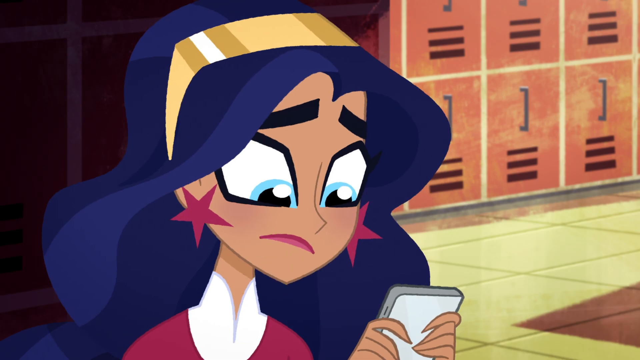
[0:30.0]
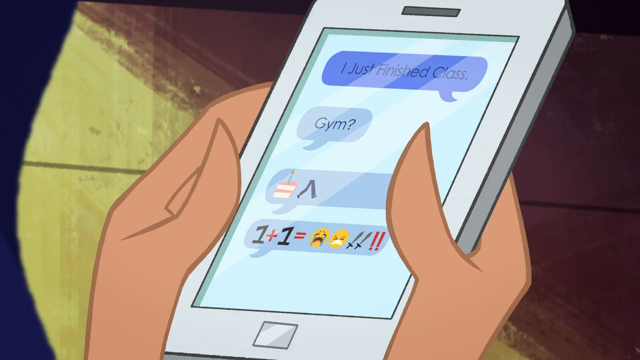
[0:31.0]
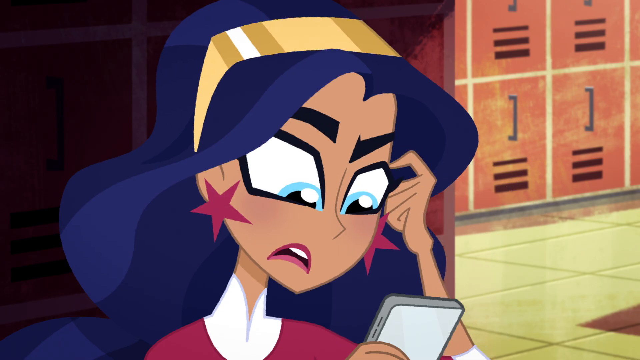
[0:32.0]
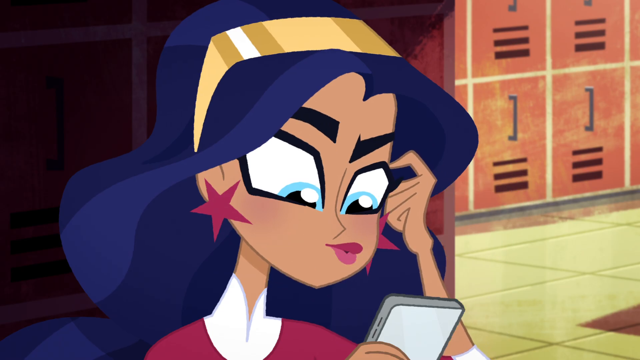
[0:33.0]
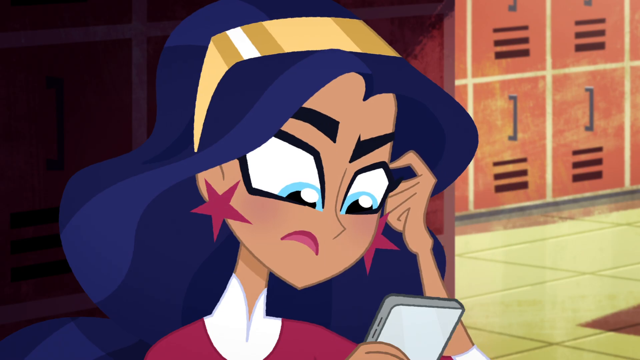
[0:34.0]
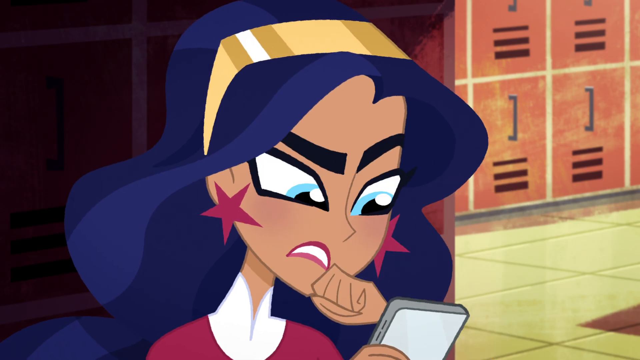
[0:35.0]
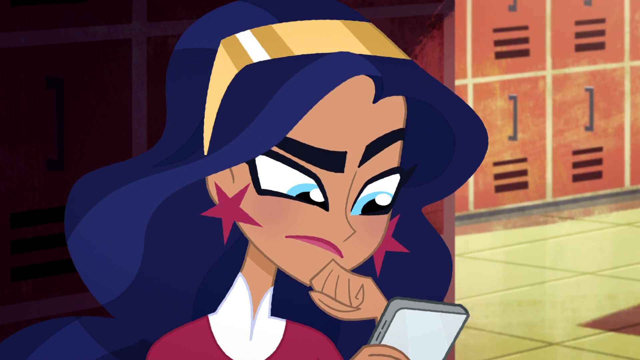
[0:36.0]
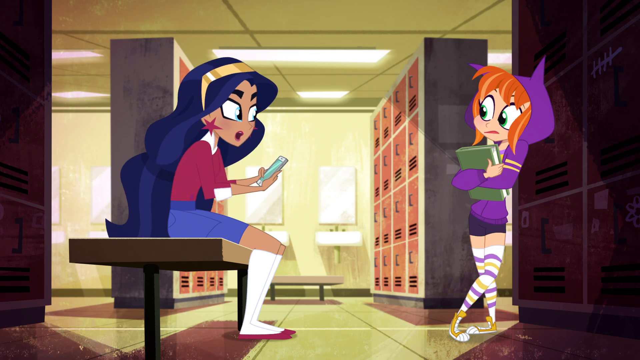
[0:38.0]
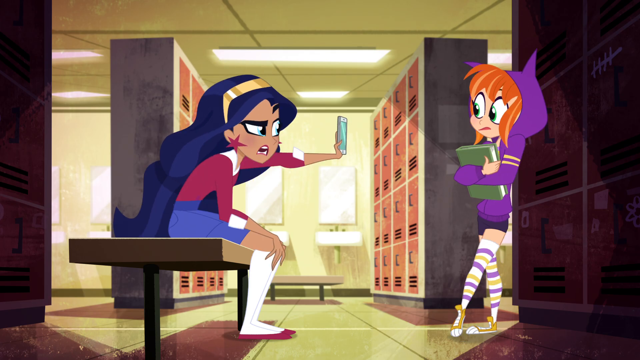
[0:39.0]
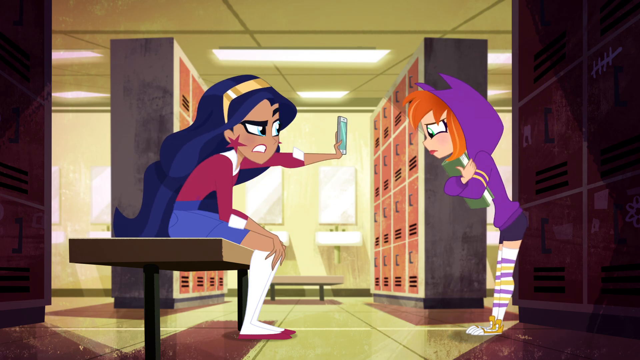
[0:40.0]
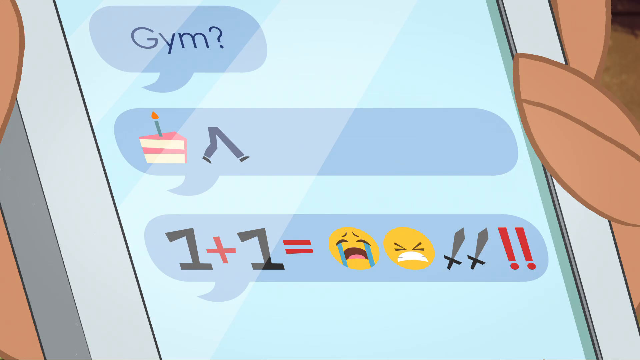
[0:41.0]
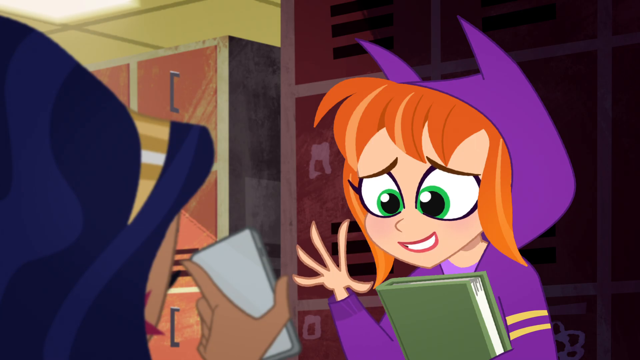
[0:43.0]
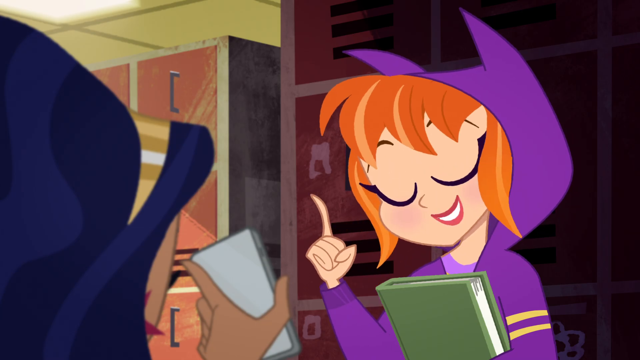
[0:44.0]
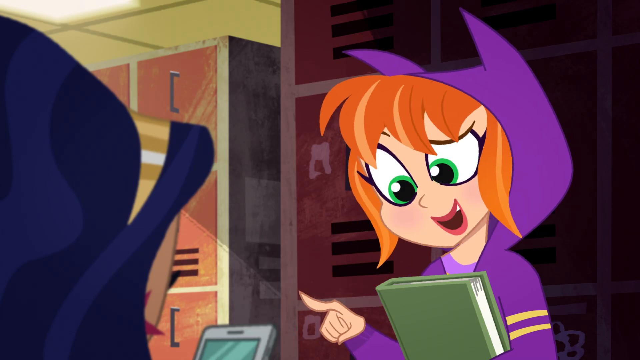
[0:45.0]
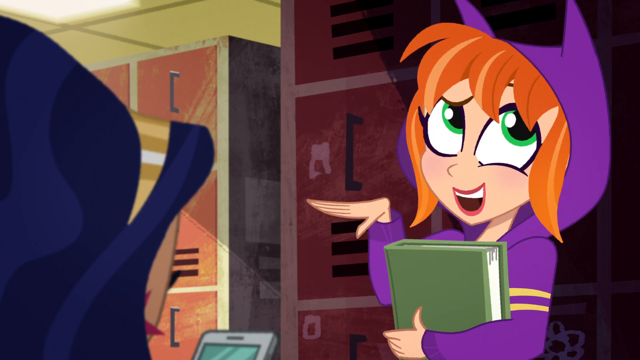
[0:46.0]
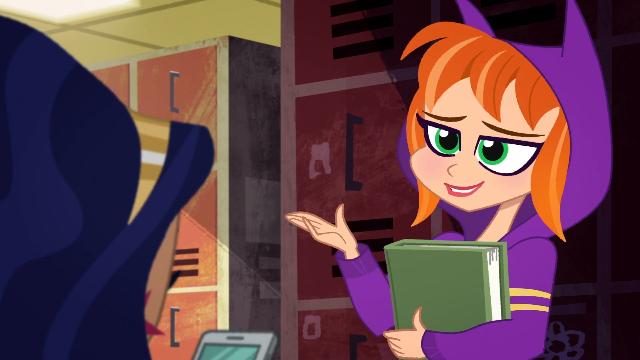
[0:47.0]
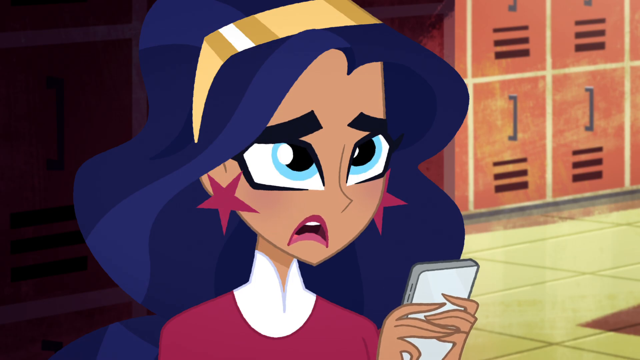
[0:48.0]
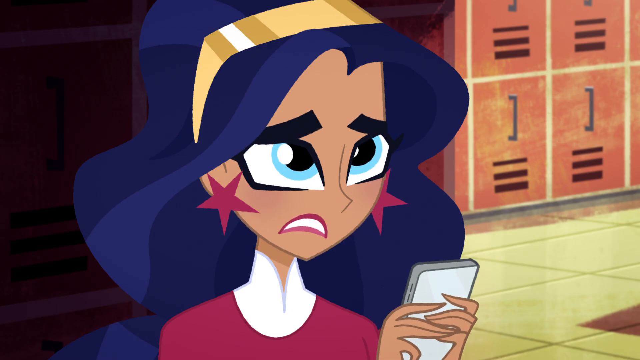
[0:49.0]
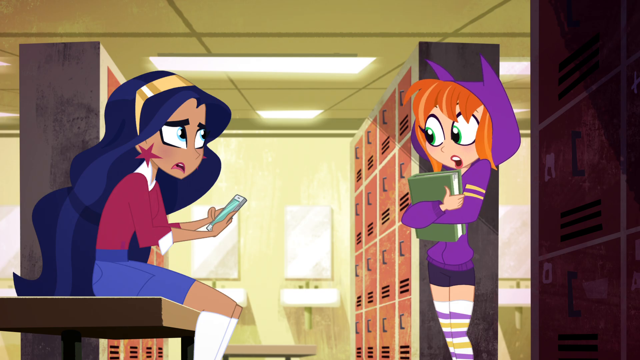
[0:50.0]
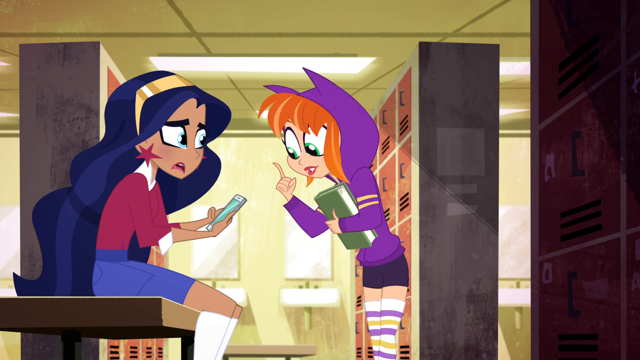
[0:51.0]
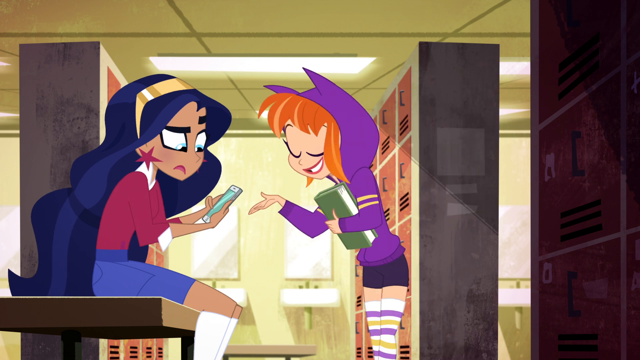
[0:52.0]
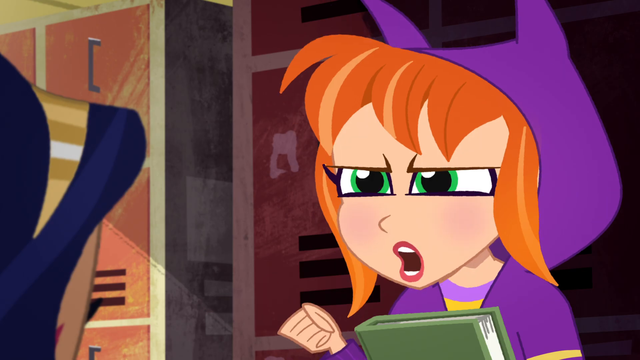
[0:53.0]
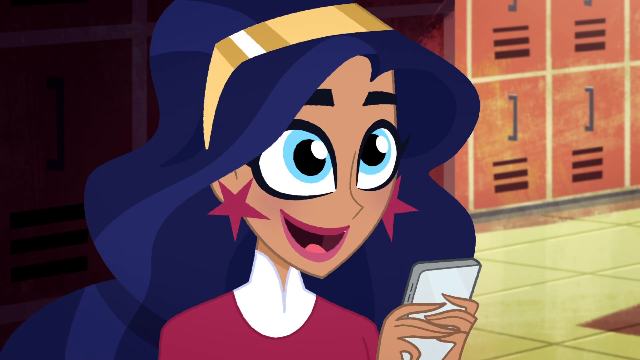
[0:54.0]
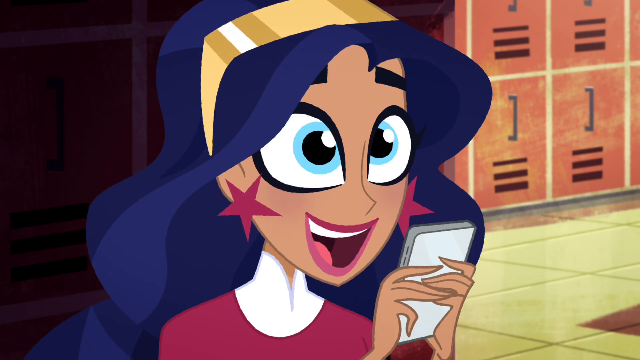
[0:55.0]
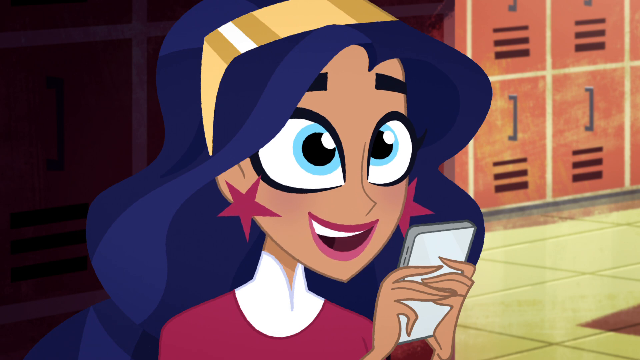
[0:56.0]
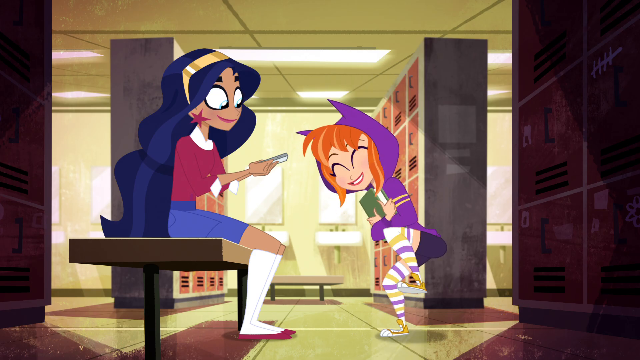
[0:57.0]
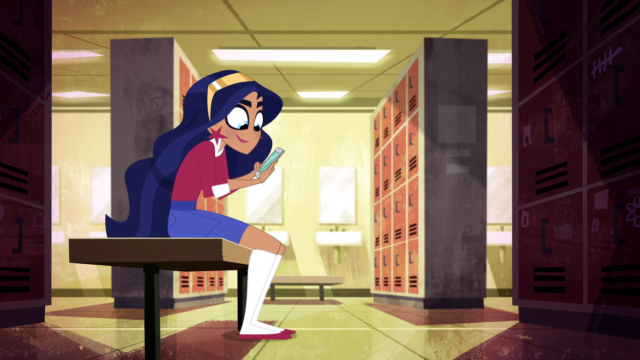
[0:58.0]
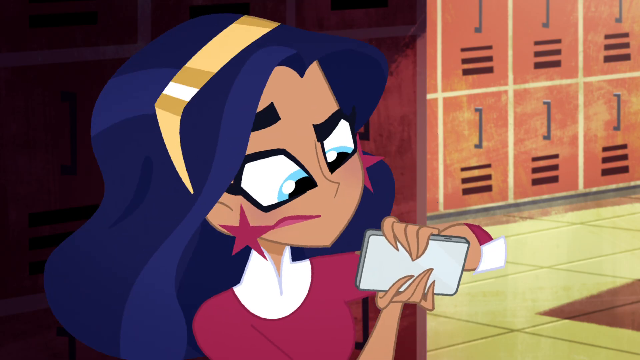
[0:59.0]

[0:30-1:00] In the illustrated, cartoon- or anime-like video, messages appear on a cell phone. The first reads "I just finished class," the next reads "Jim," then comes a cake with legs that walk, and the last is one plus one equals a crying face emoji, an angry emoji, two sword emojis, and two red exclamation point emojis. The girl seems upset by the message, scratching the side of her head as she looks at the phone. Eventually she puts her fist up to the front of her face, and another character wearing a blue-purple hoodie walks into the room. This character looks at the messages, in particular the last two, and appears to understand them or is at least saying something about them. The other girl keeps looking at the screen, seemingly confused. She turns the phone sideways, holds it up in front of her, and tilts it at different angles, trying to figure out the last two messages.